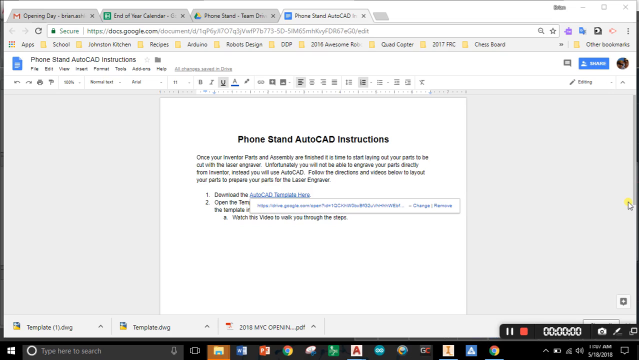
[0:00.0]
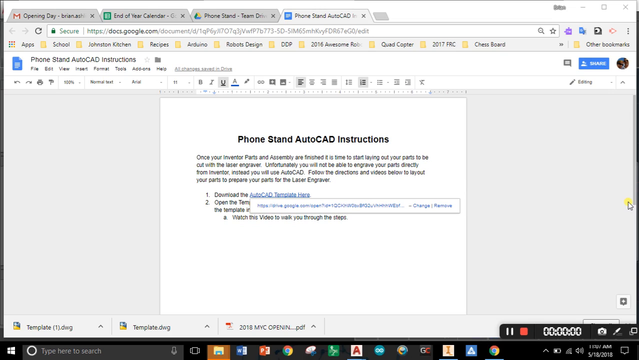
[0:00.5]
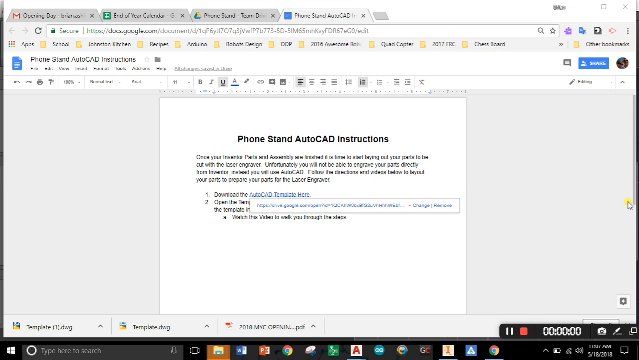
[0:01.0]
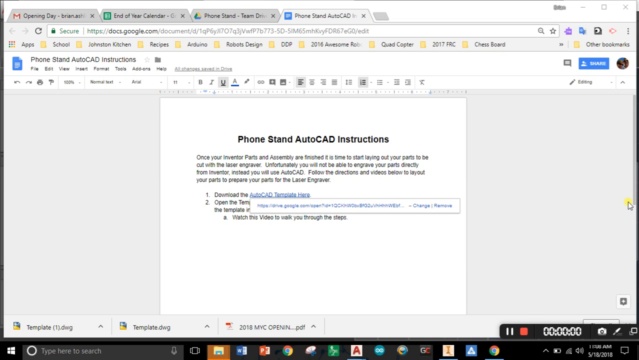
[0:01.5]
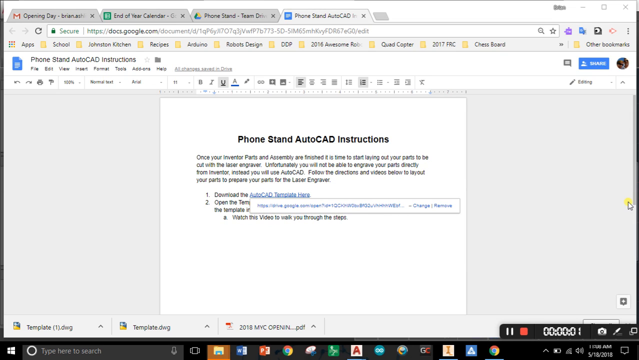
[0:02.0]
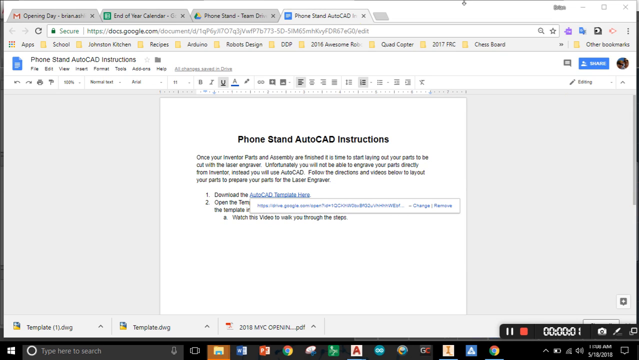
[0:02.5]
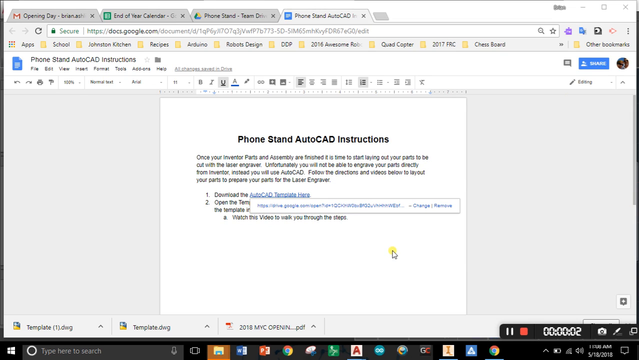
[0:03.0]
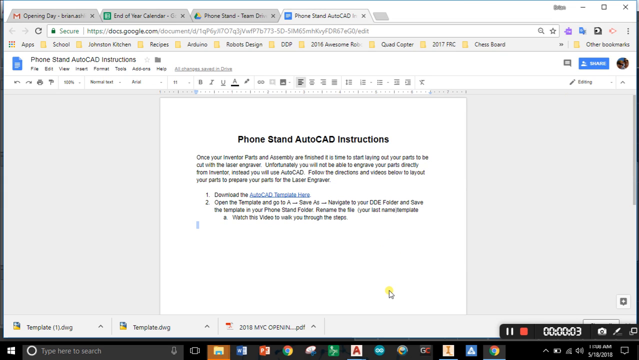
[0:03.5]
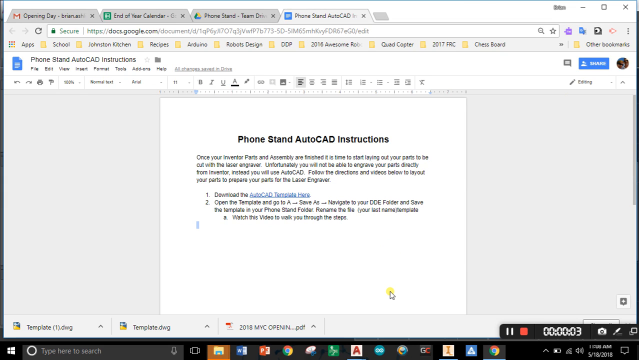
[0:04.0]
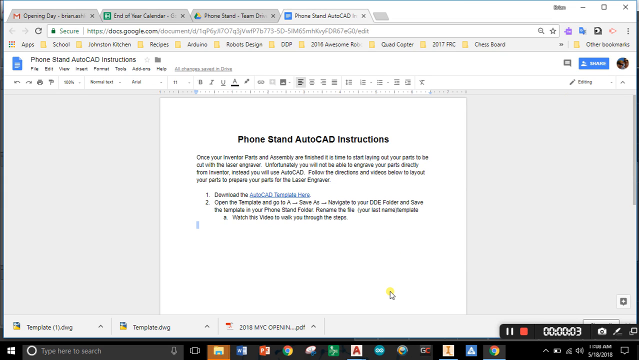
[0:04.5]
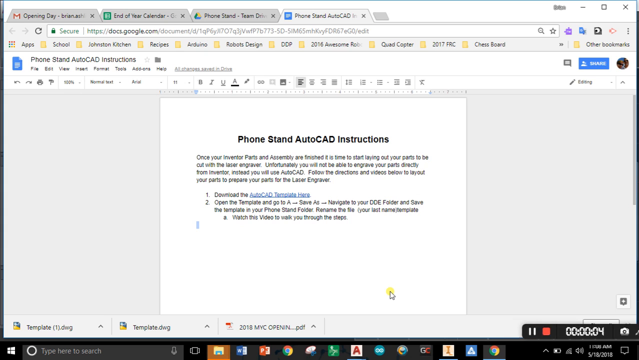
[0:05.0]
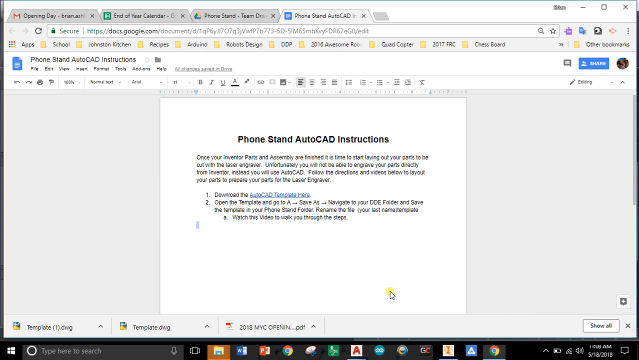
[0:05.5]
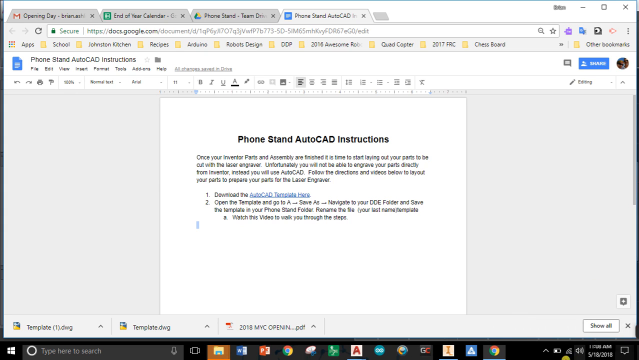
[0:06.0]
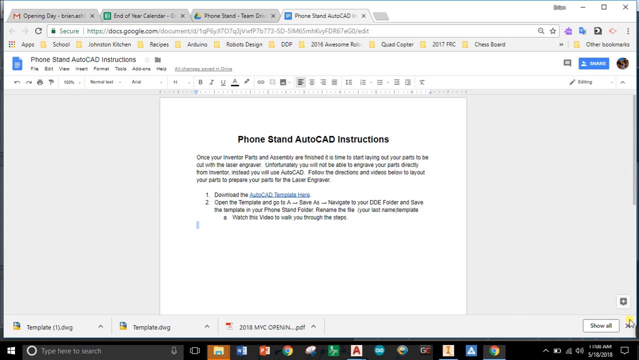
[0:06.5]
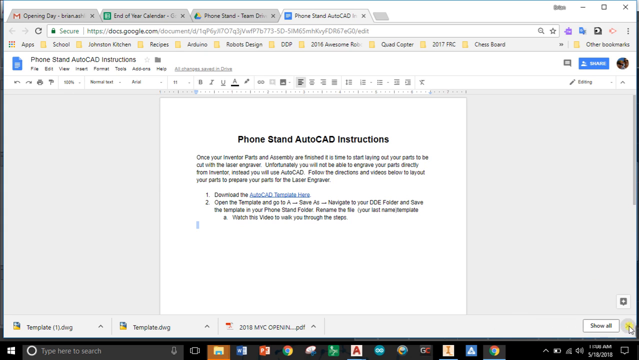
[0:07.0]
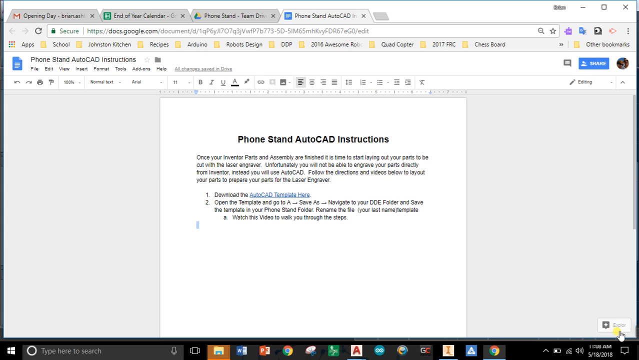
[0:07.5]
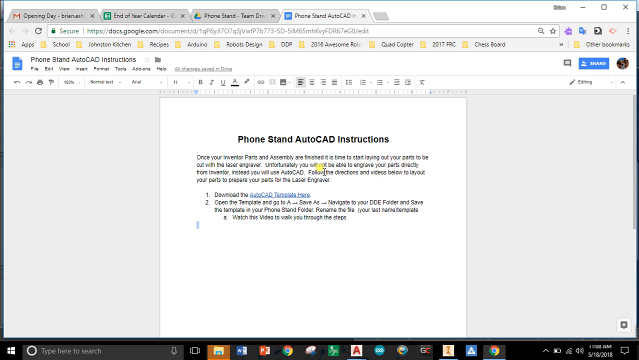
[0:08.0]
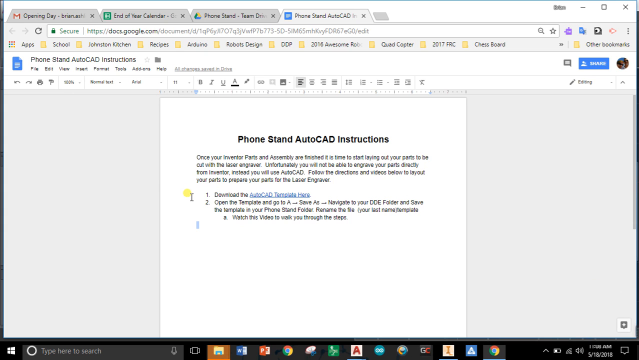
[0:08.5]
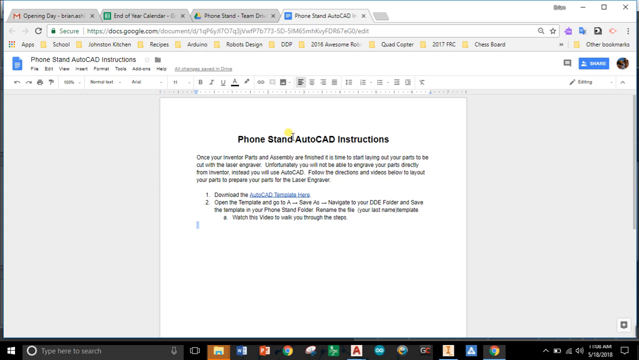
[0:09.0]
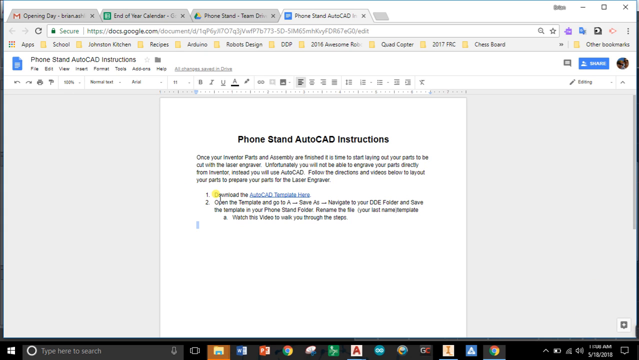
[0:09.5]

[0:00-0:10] A Word or Google document related to phone stand AutoCAD instructions is open, and someone highlights this AutoCAD document as they start their recording. There appears to be a prompt or recording icon at the bottom right of the screen, seemingly some sort of pop-up. The browser is full of downloads, templates apparently downloaded before the video started, and this is closed once the video begins. The mouse highlights information as it moves, so some sort of highlight mode is turned on, and the cursor hovers over the text in the document being gone through.